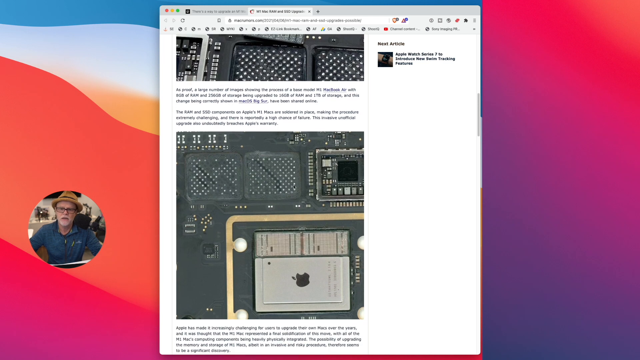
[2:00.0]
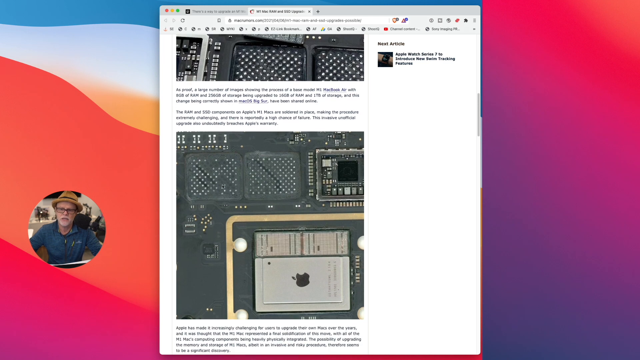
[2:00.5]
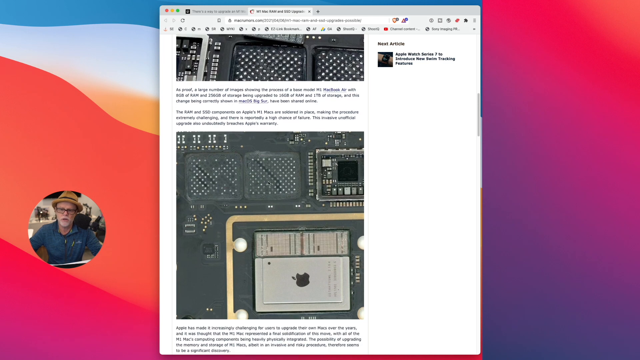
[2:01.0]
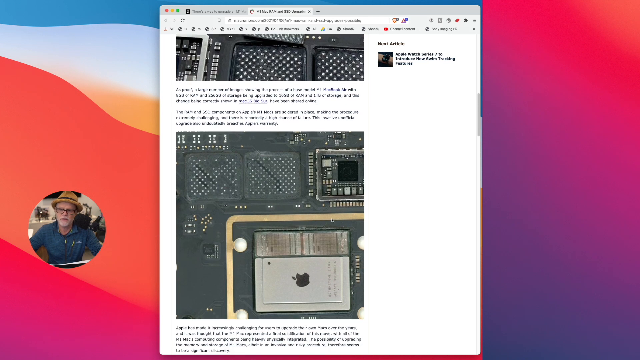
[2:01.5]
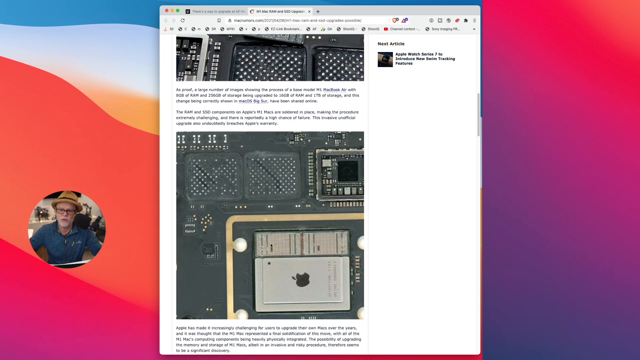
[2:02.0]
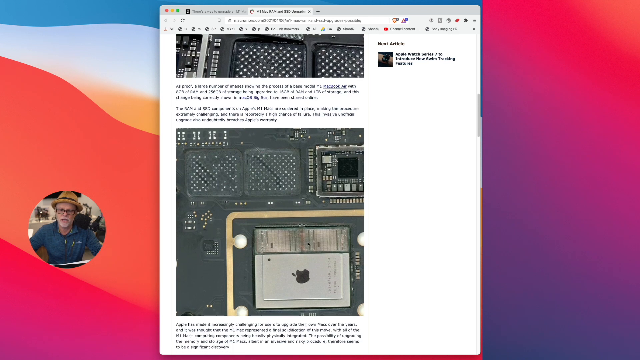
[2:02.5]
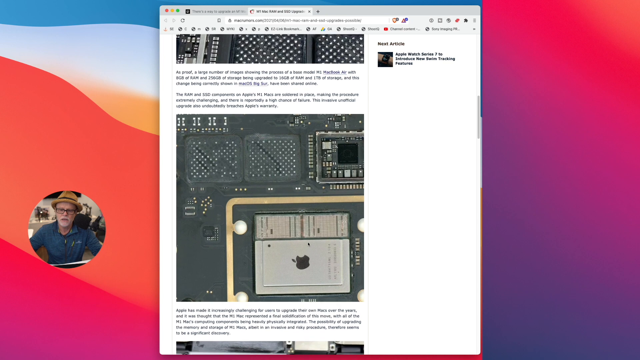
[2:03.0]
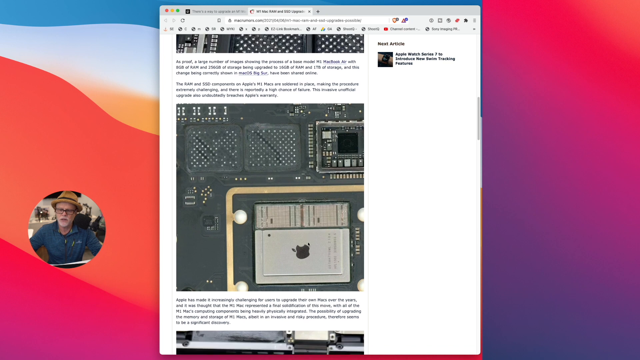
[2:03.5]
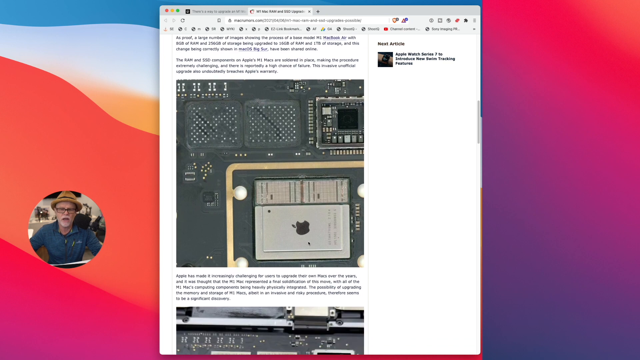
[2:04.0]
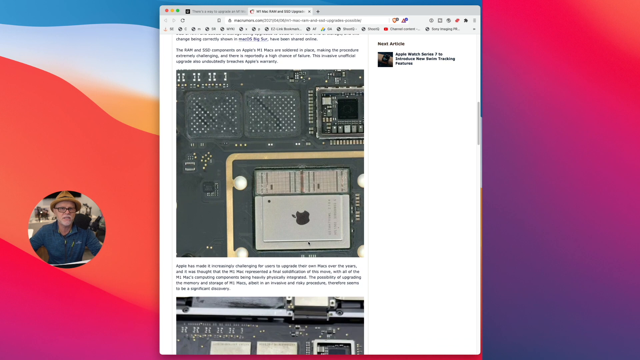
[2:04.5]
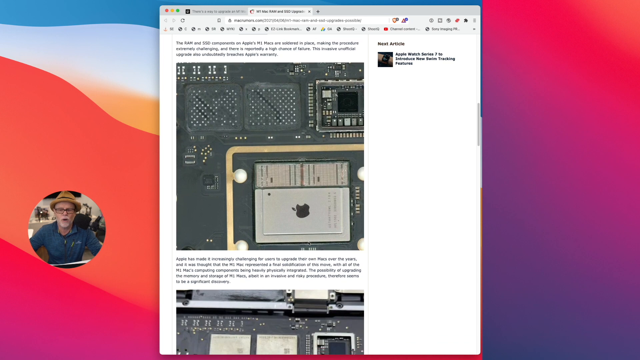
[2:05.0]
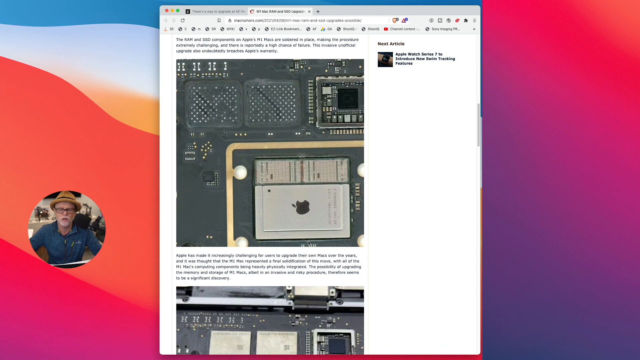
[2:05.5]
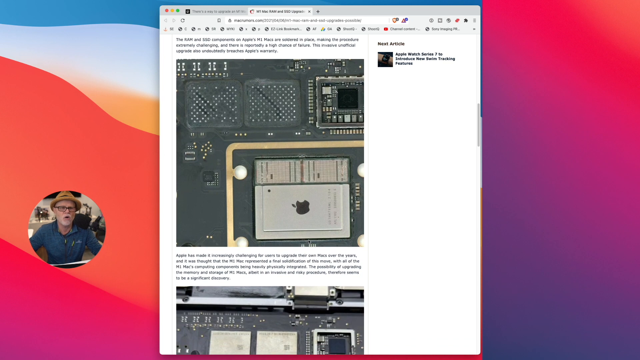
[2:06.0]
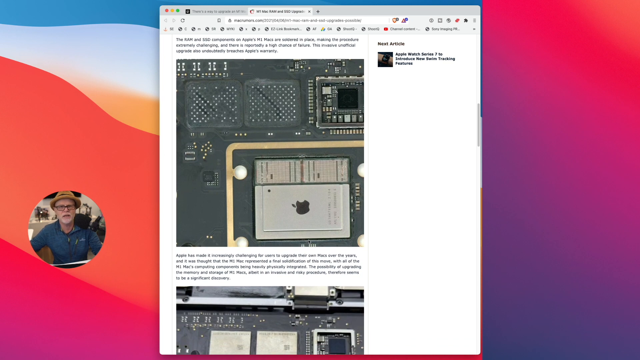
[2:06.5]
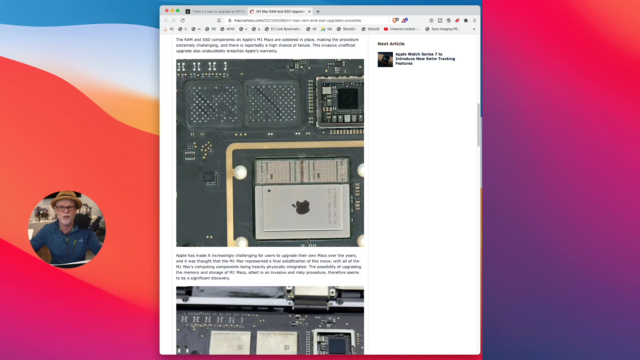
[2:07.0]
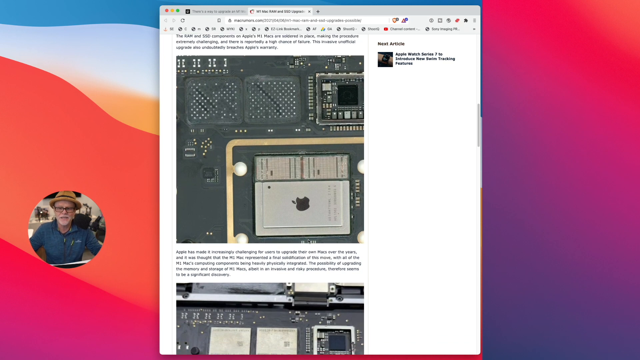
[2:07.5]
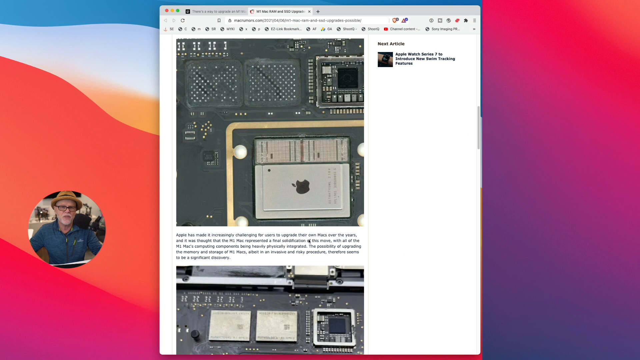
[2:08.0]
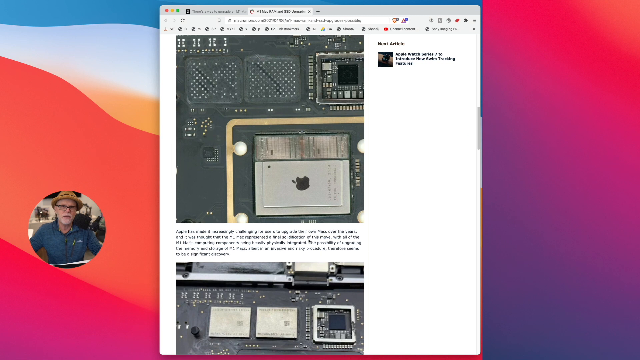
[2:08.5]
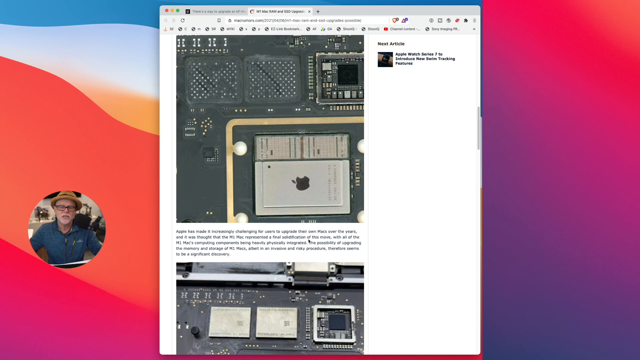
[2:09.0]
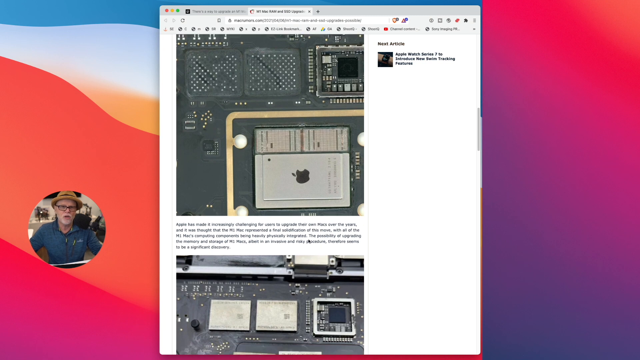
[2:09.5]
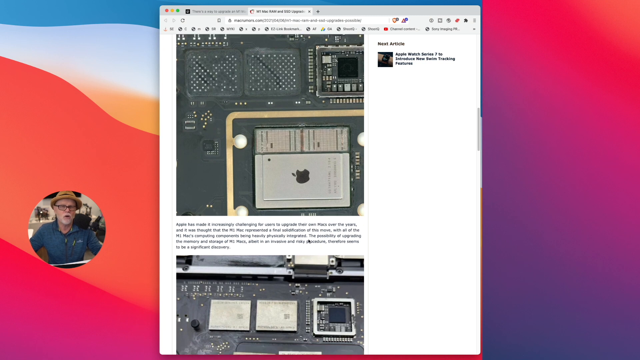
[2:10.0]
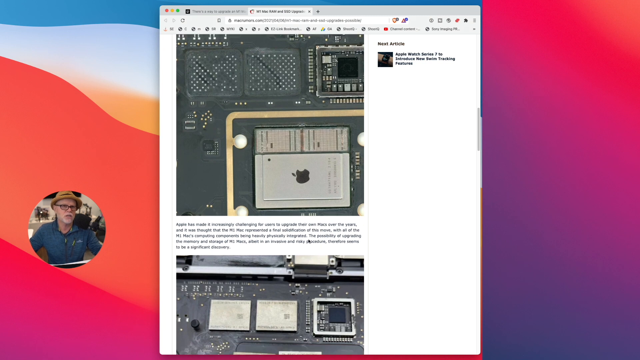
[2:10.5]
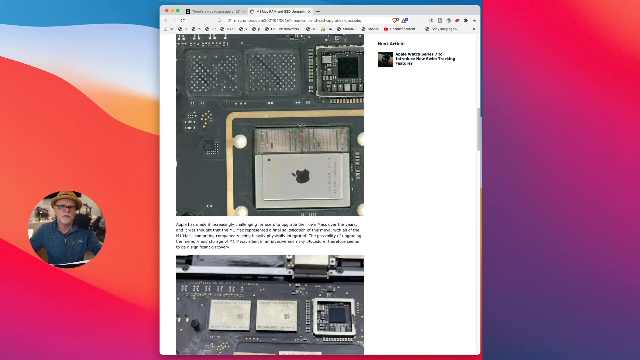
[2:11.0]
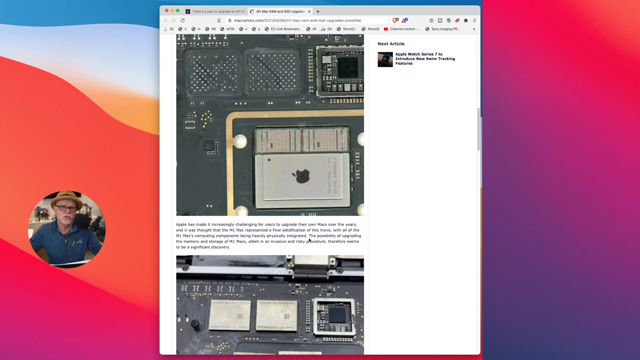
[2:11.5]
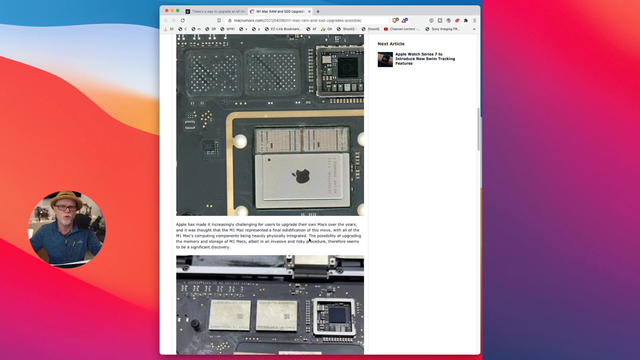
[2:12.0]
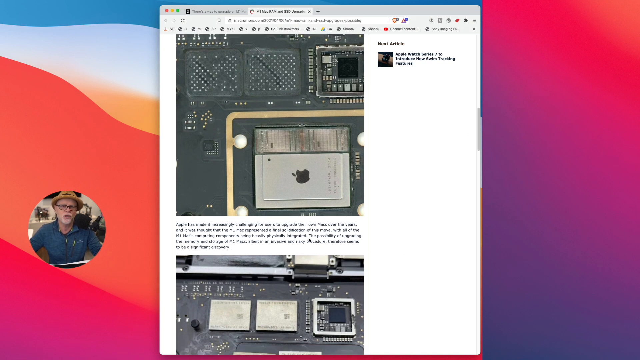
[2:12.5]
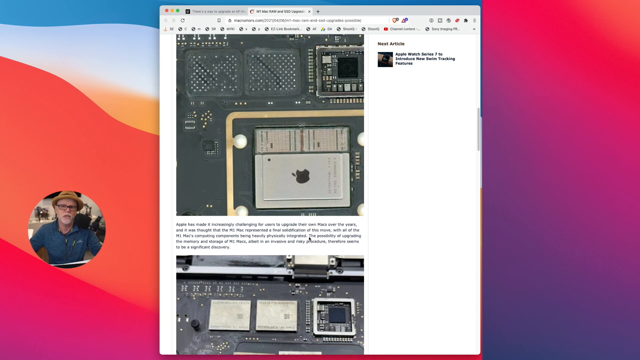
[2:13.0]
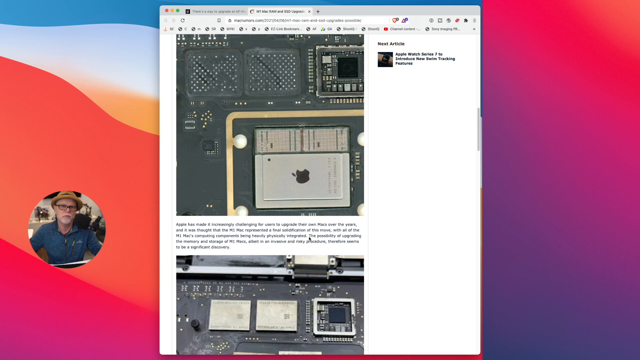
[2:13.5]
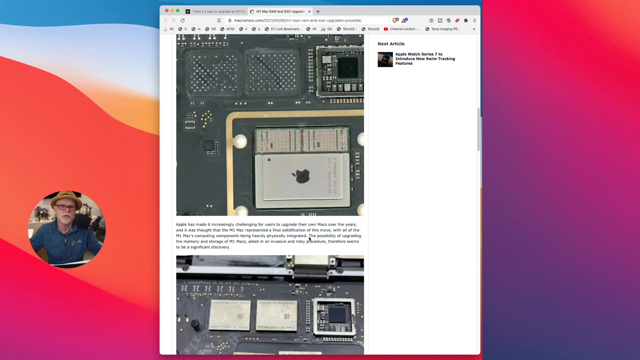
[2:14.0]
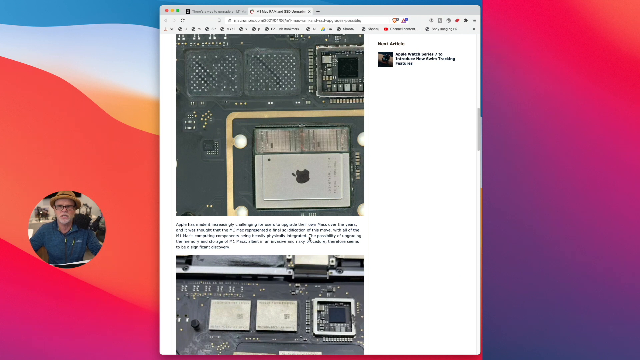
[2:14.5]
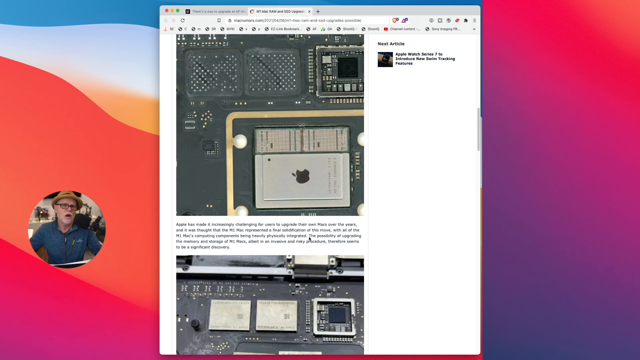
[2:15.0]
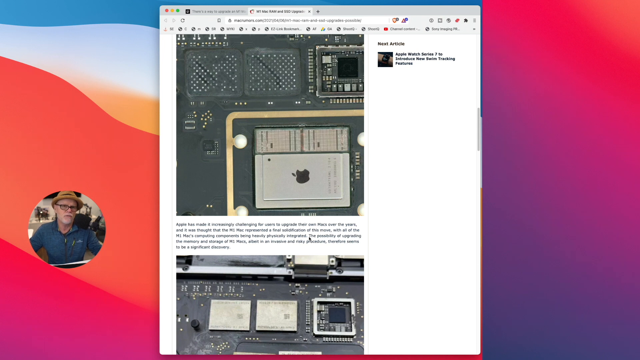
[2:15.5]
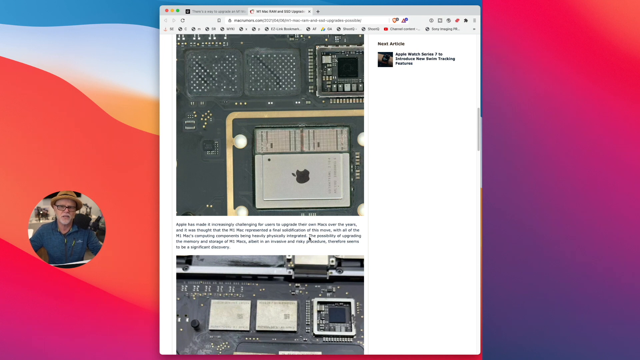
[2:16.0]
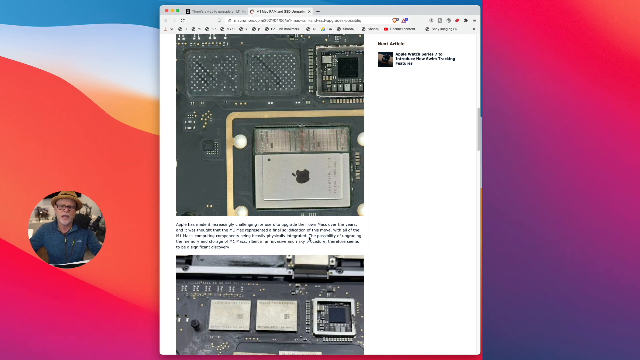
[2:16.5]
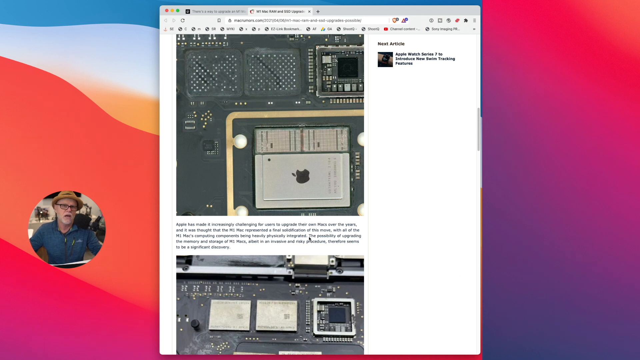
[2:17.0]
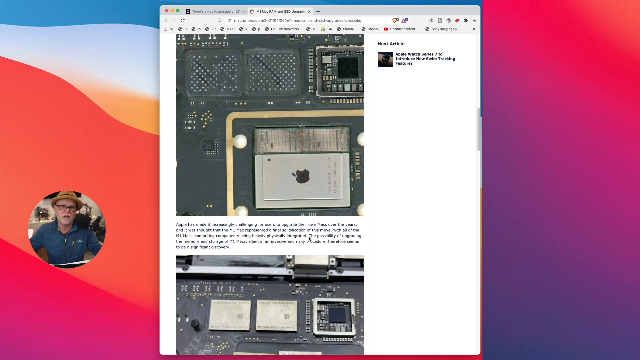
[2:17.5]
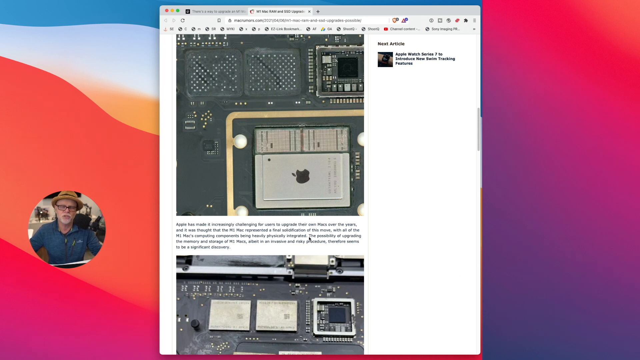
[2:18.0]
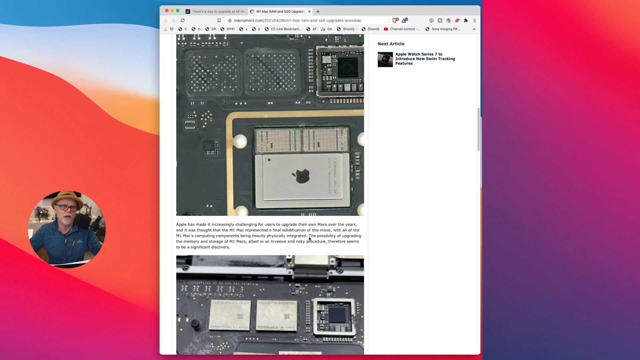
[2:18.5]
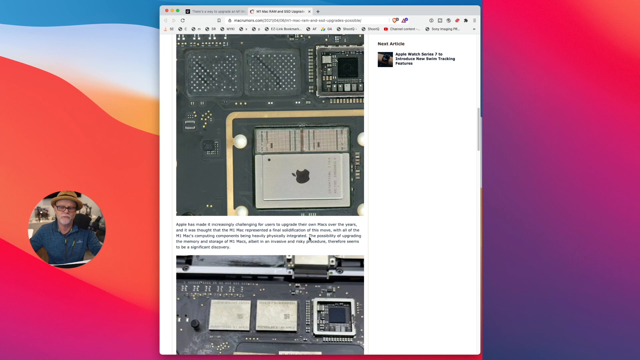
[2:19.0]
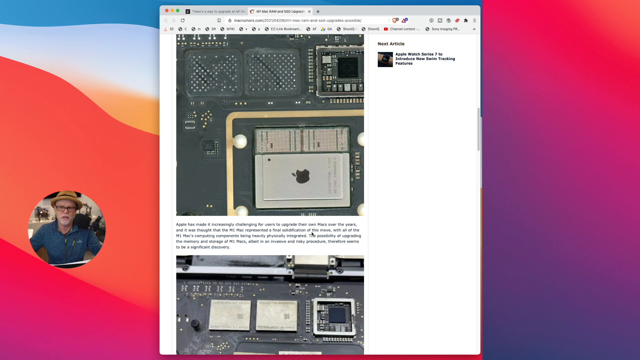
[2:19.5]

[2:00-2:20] The man is in the lower left corner, still minimized, and an image on the right shows equipment and metal pieces. He keeps talking and scrolling slowly down the site, past words between two images that look like a computer broken down, flipped over and taken apart; the text looks like five or six rows but is too small to read. The scrolling stops on a picture showing the Apple logo on a rectangular, silver piece that looks almost reflective, like a mirror.